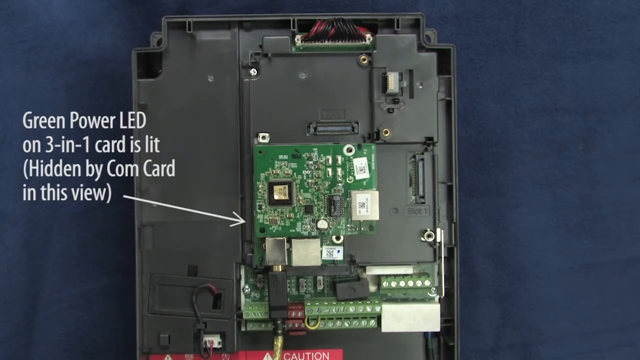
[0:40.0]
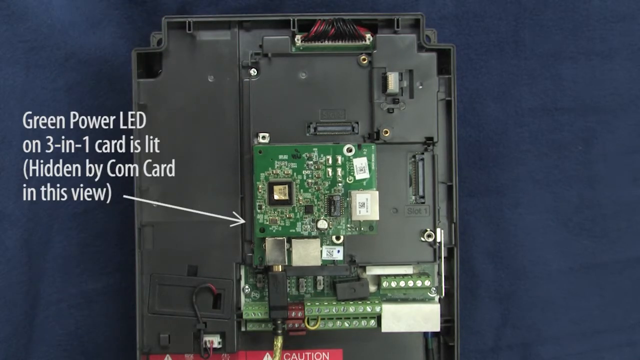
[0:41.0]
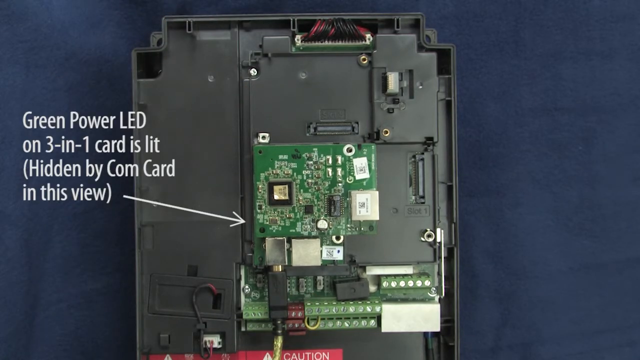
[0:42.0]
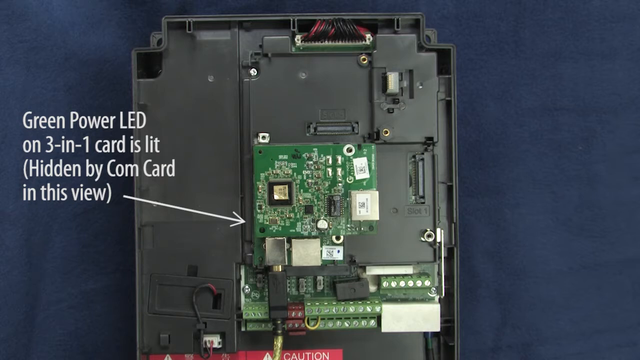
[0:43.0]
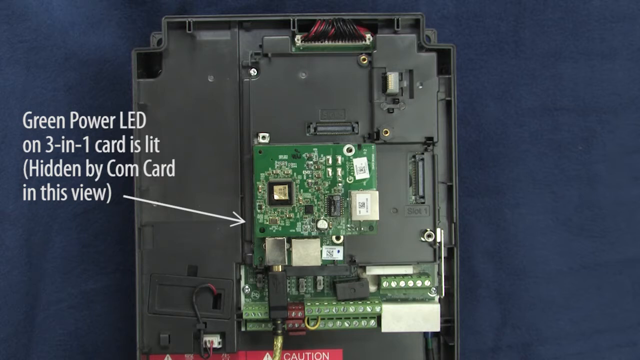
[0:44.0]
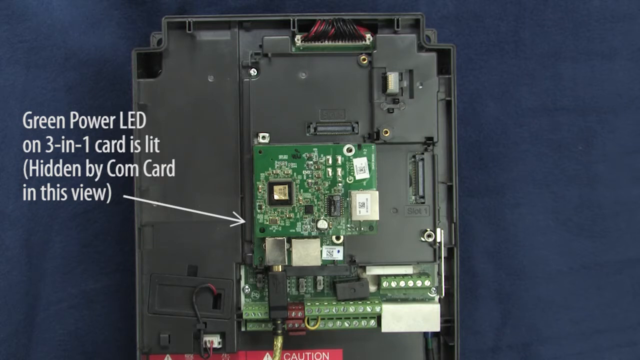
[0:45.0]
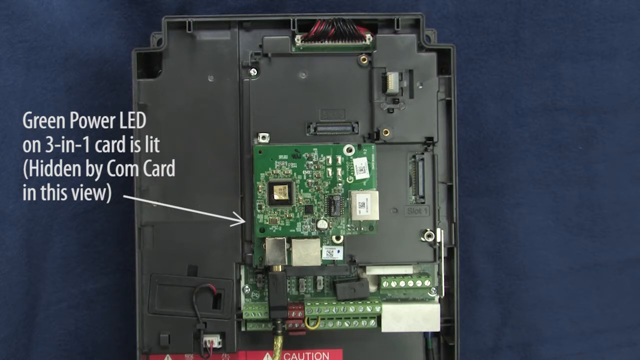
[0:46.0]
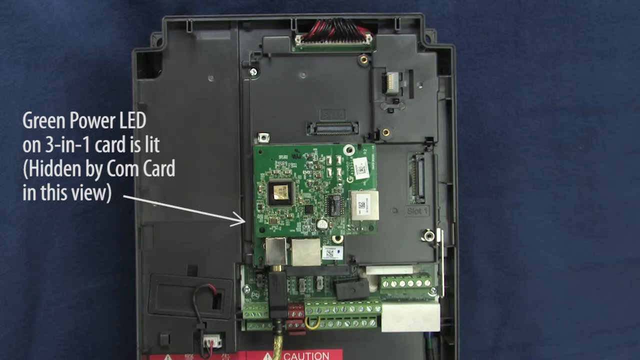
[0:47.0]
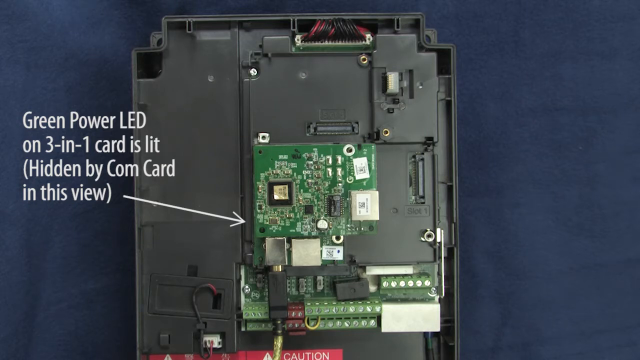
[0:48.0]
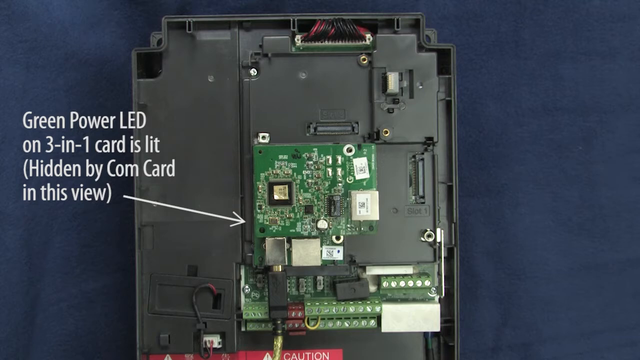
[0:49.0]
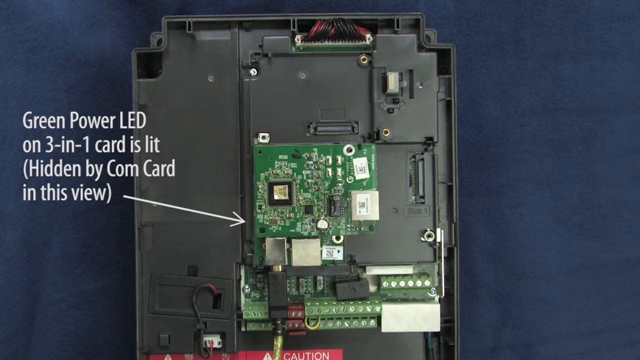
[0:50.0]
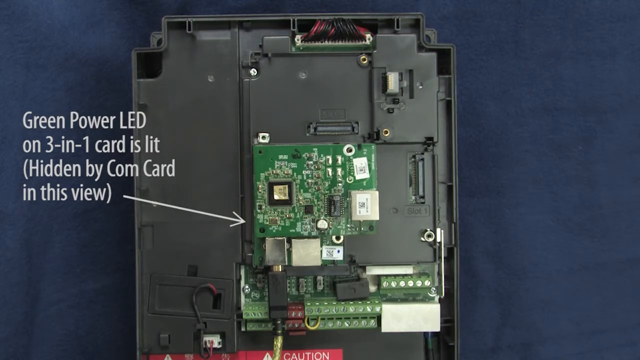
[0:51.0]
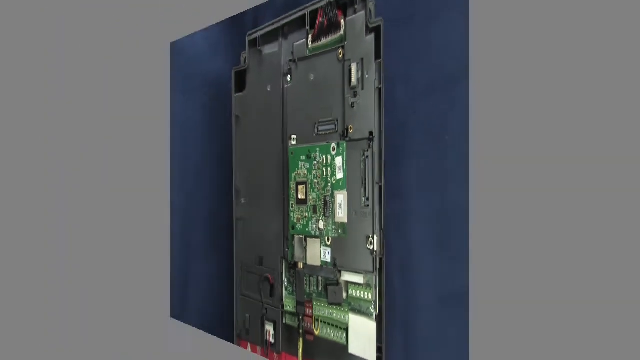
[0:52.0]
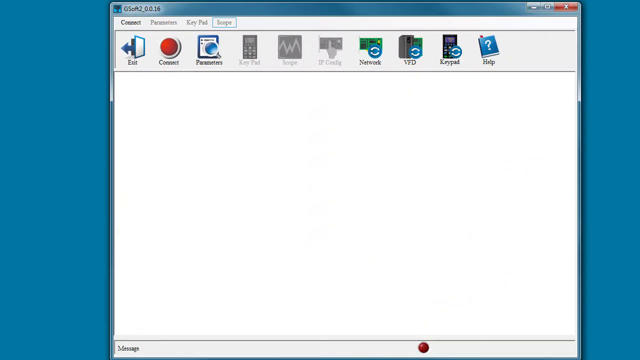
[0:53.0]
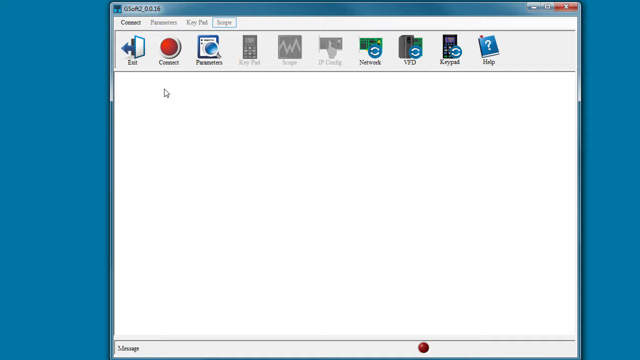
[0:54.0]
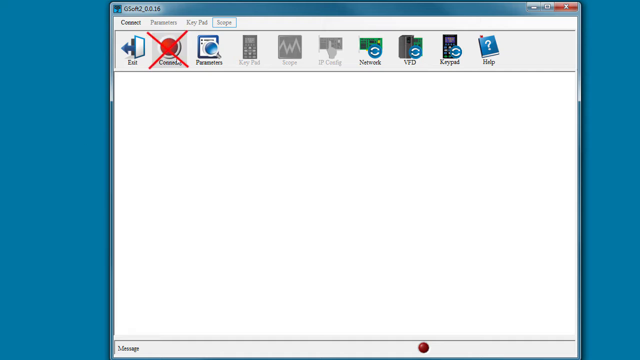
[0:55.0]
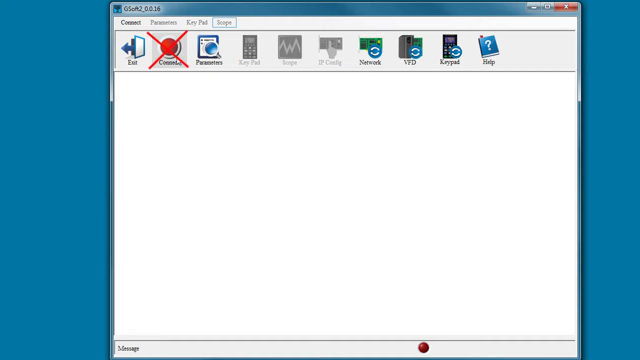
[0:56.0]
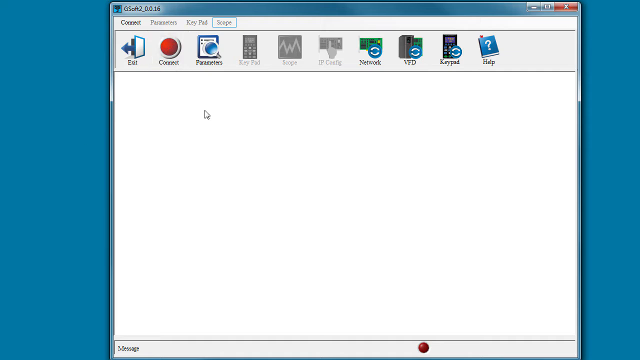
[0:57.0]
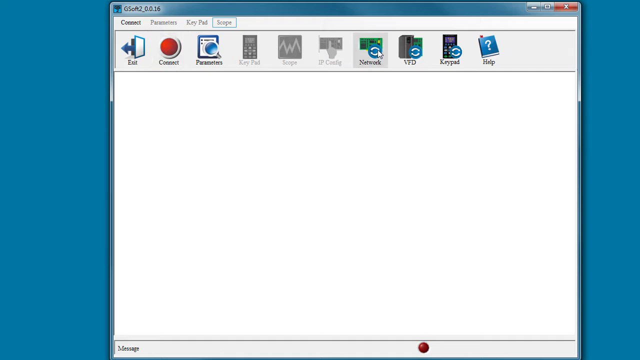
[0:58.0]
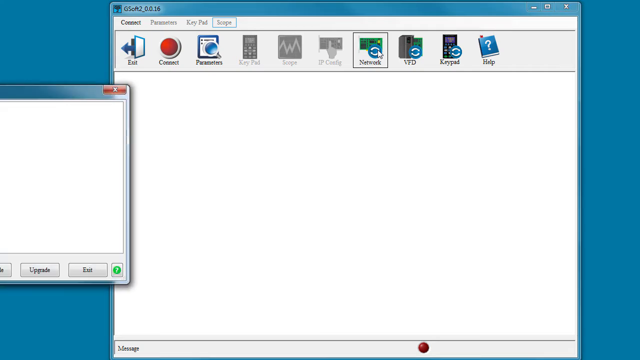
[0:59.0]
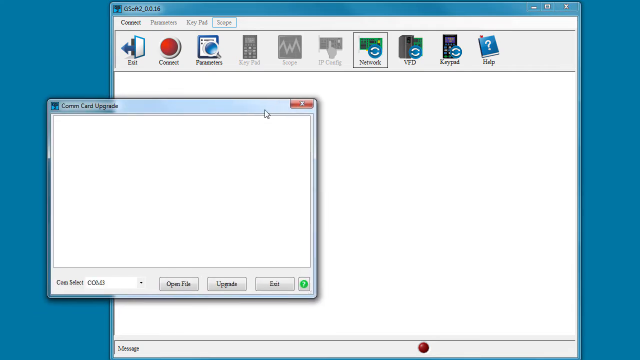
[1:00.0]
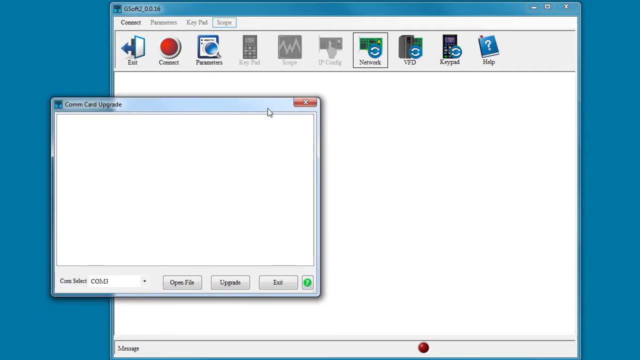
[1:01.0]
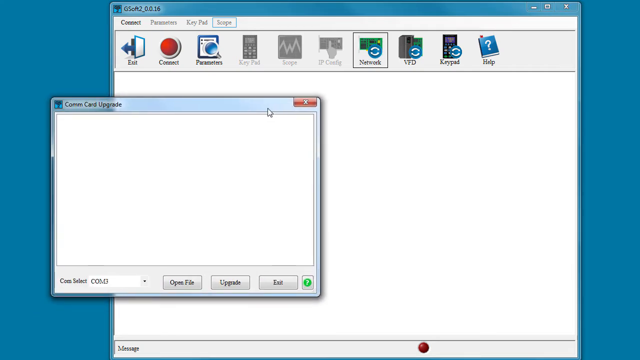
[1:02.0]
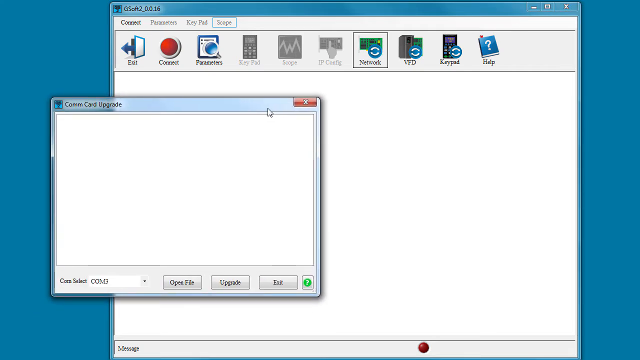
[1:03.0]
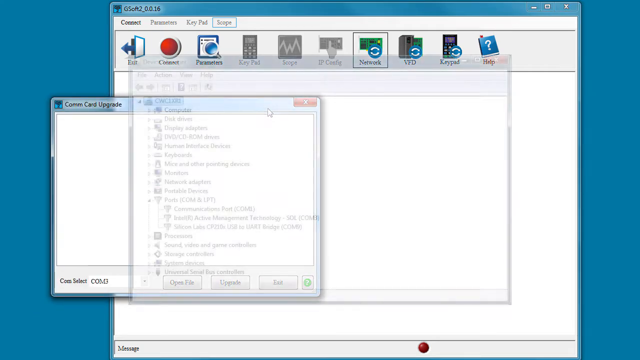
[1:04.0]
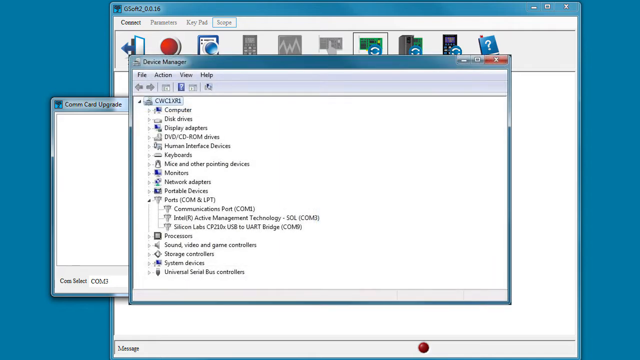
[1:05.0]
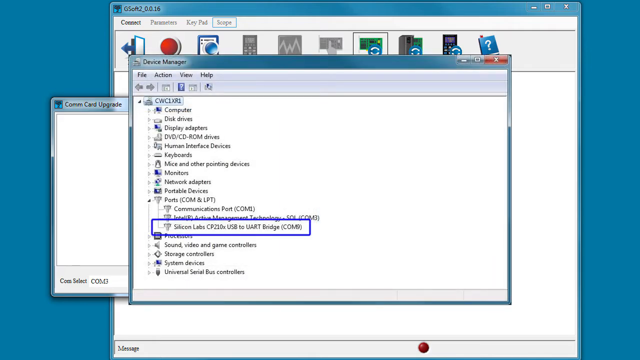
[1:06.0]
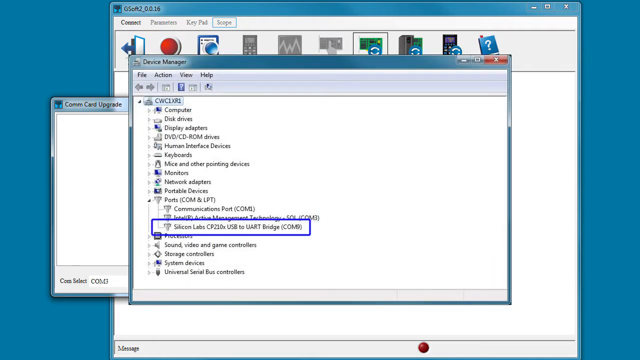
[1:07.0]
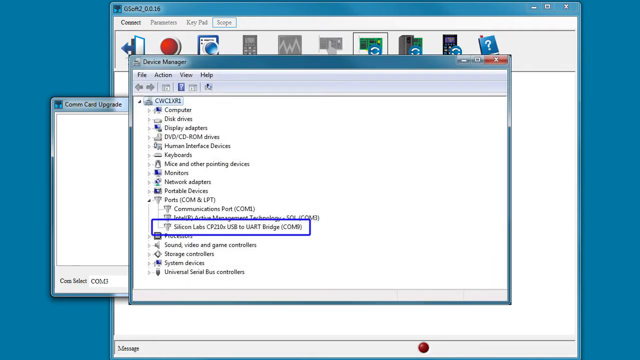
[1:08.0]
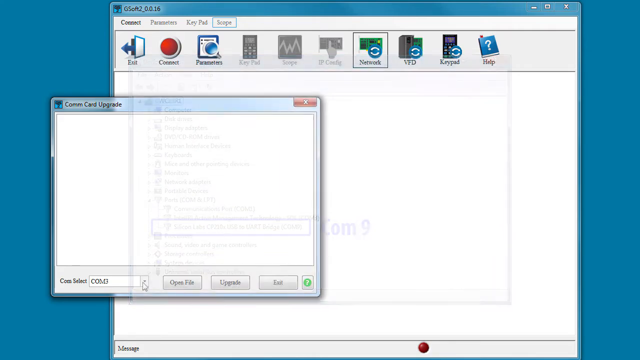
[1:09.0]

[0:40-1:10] Text reads "the green power LED on a three-in-one card is lit hidden by a com card in this view," with a card placed over top. A display screen then shows the device being connected to the network. On the computer, the settings are opened: the network connection is selected, "Com Card Upgrade" is chosen with Select, and under the ports, COM9 is clicked and selected.